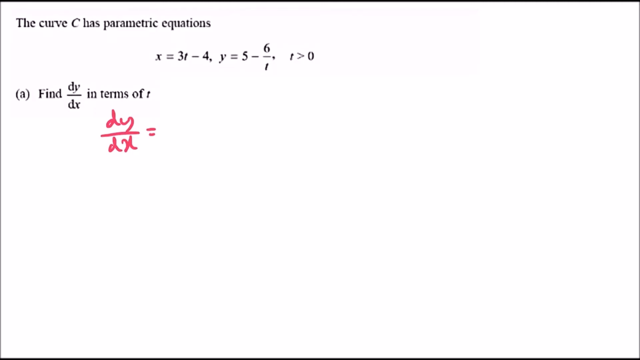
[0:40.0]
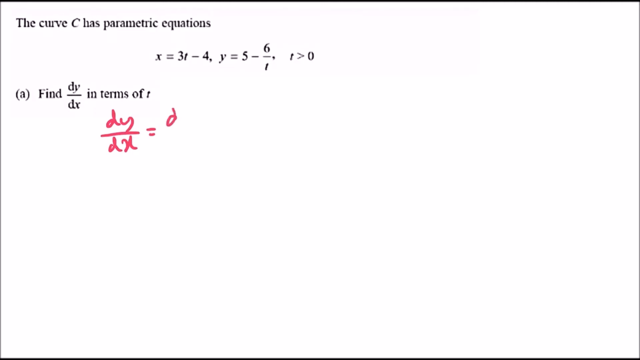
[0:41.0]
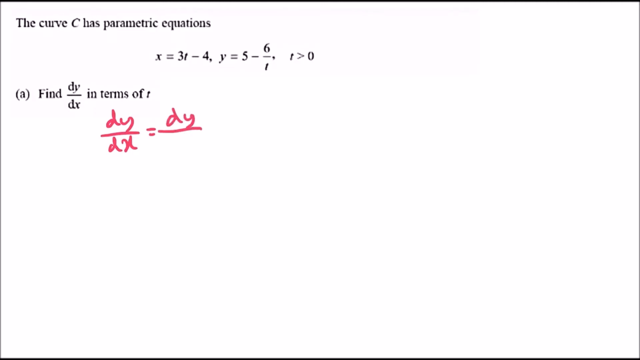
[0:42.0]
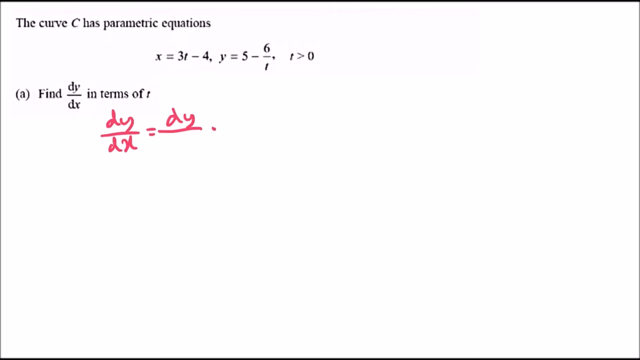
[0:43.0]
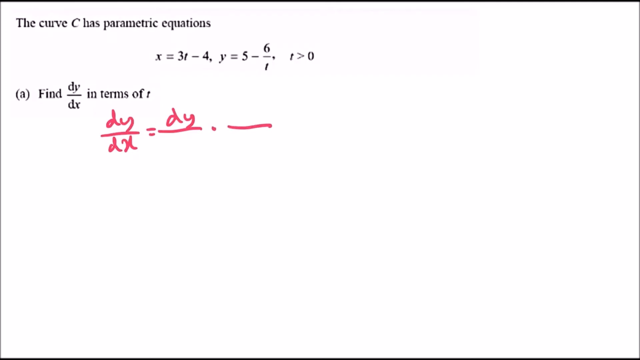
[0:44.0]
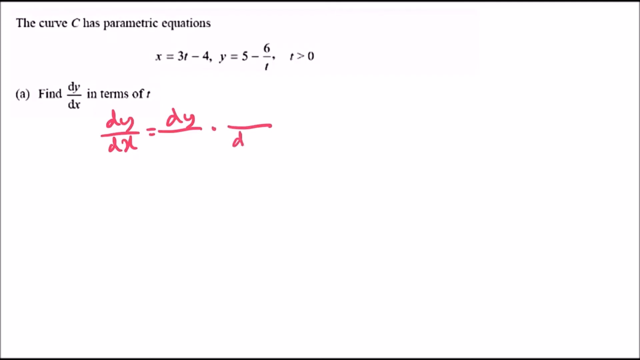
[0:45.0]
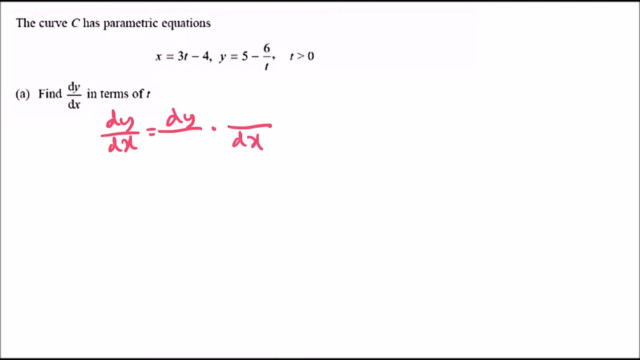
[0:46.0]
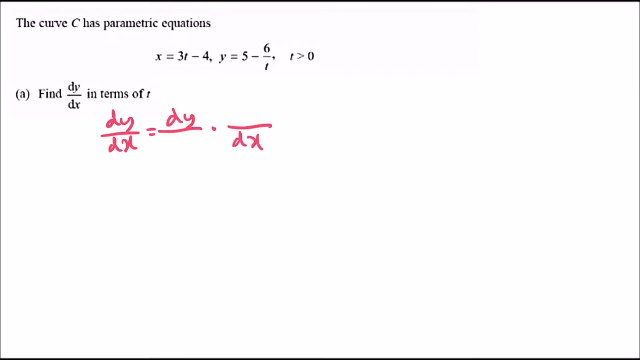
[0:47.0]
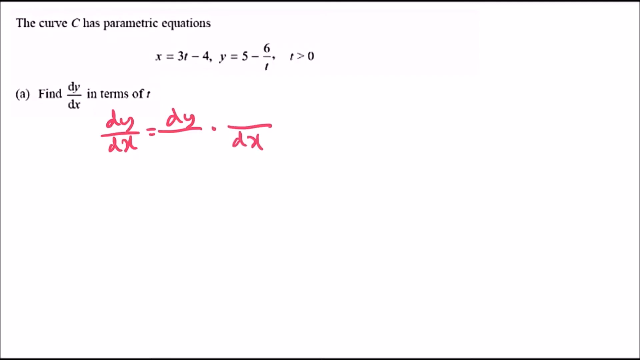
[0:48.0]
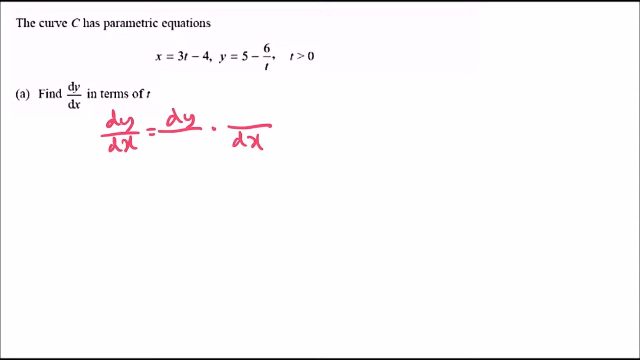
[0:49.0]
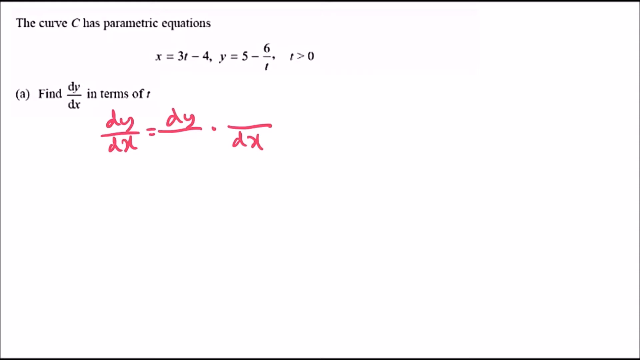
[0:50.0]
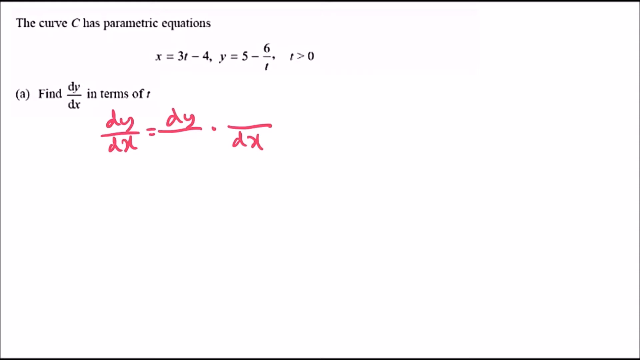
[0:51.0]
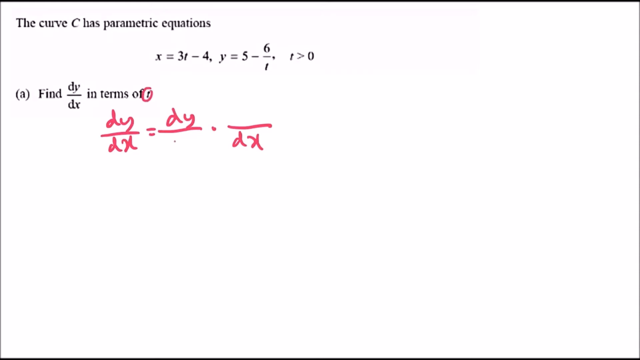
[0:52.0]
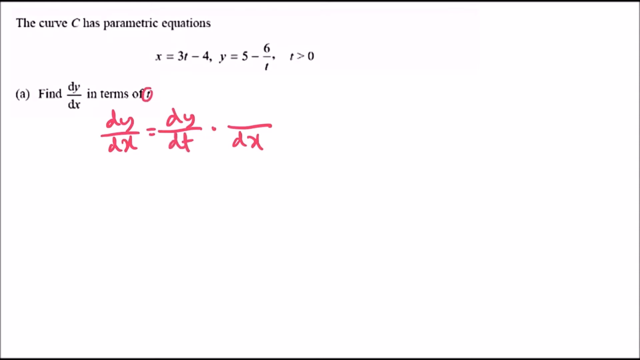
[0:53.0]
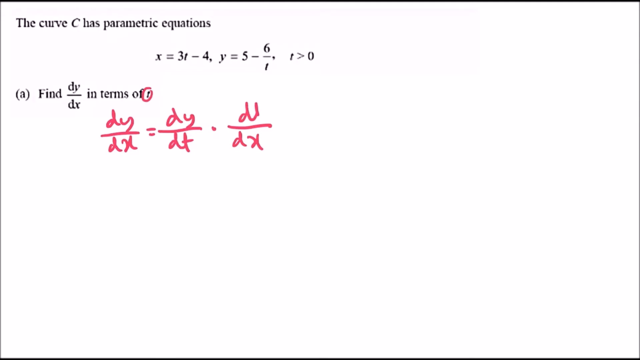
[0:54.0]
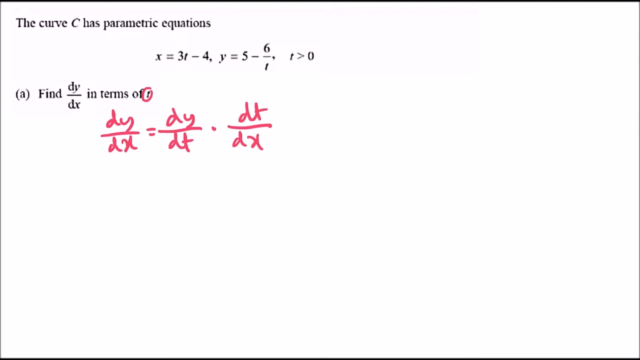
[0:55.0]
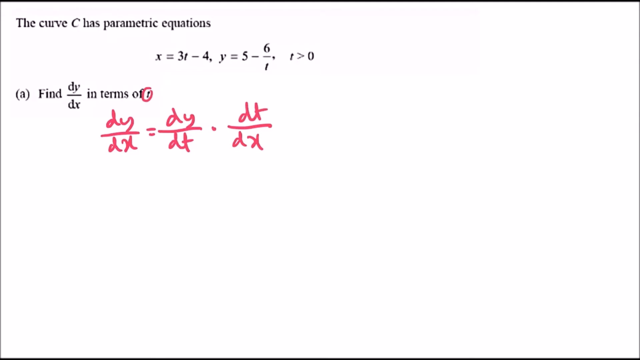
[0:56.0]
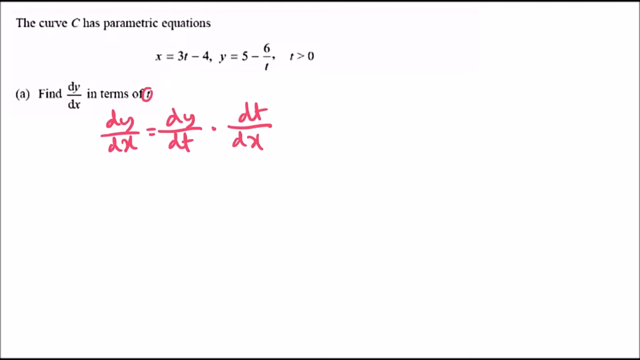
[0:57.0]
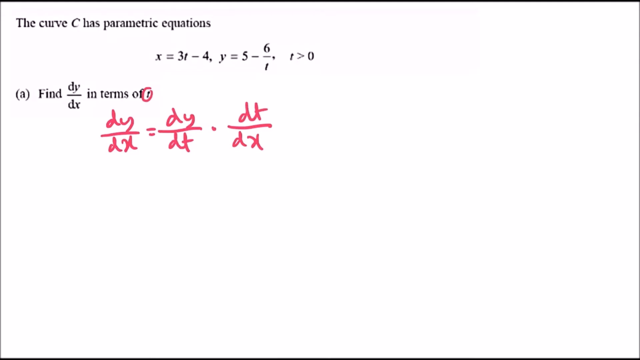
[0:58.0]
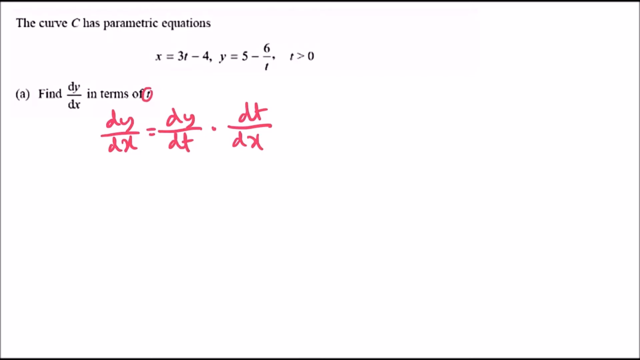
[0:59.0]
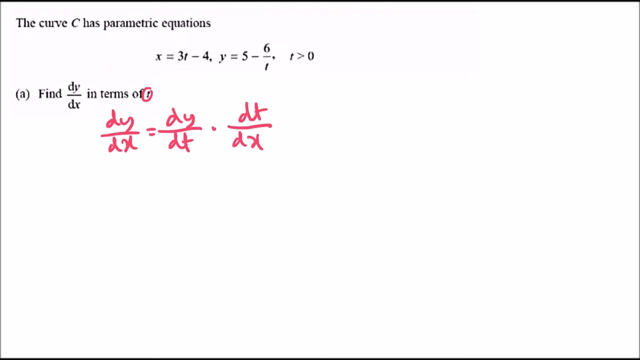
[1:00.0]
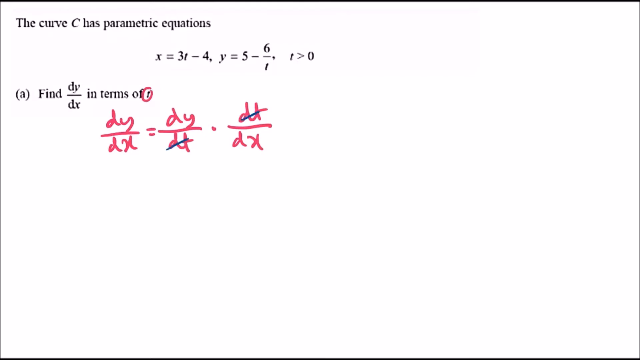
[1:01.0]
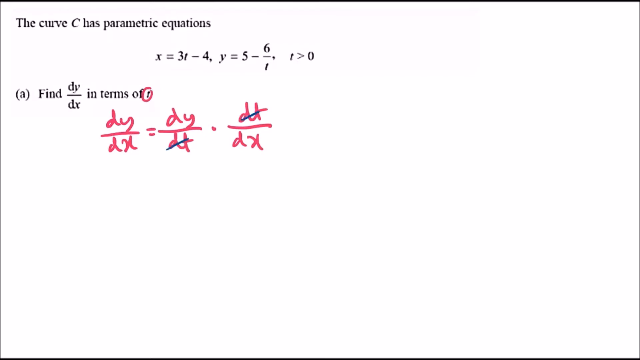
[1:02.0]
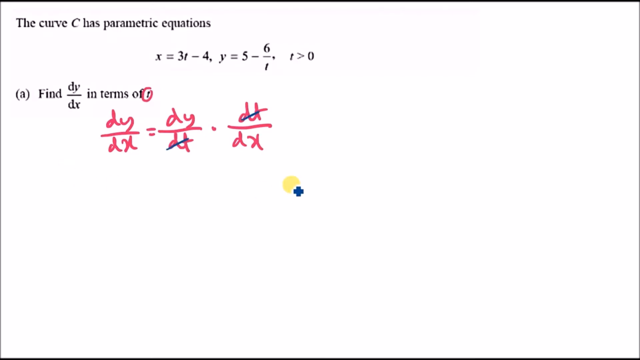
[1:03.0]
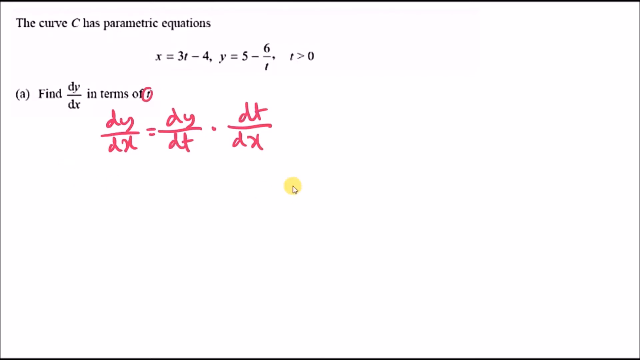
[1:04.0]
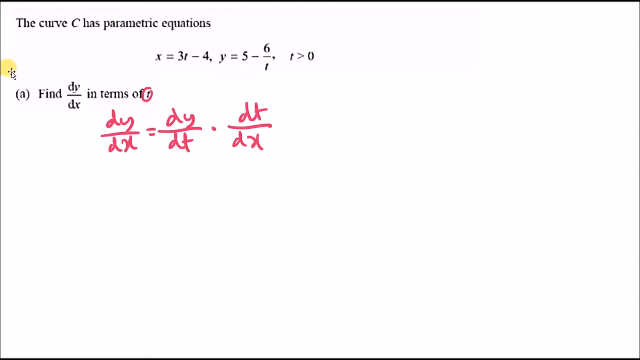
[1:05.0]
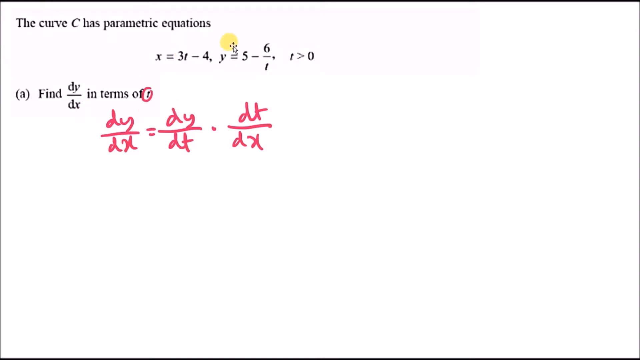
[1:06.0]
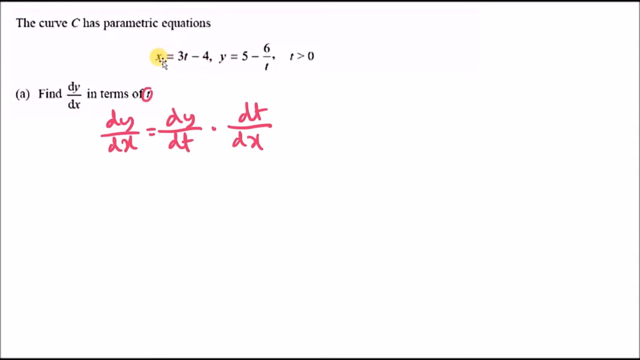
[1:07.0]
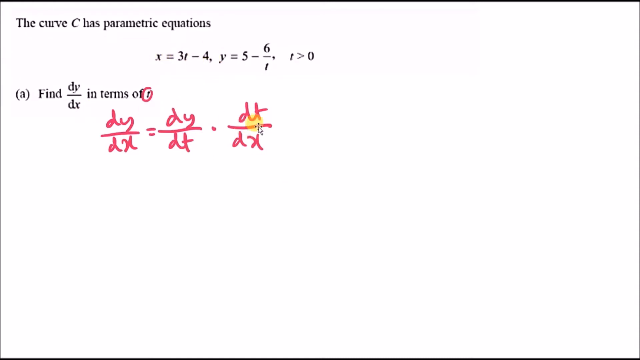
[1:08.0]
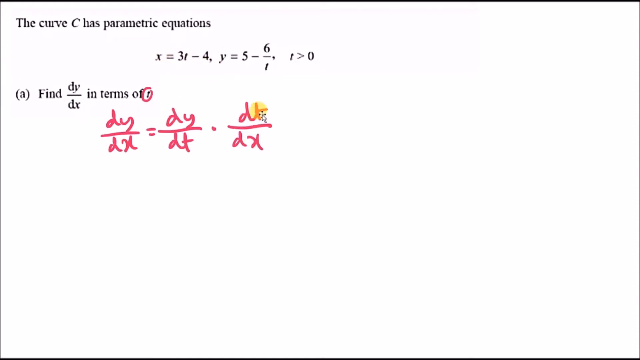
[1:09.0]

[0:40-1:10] On a mostly white background, the math question asks to find dy over dx in terms of t and provides the curve C with parametric equations. In pink marker, dy over dx and an equals sign are written. Next comes dy over a blank denominator beside a blank numerator over dx. The t in the question is circled, and dt is added below dy and above dx so the equation reads dy/dx = dy/dt dt/dx. The dt below dy and the dt above dx are crossed out to show they balance out, and then the crossing out is undone. Various parts of the given equations are circled, along with part of the written equation, seemingly connecting the two. Everything is done fairly slowly.